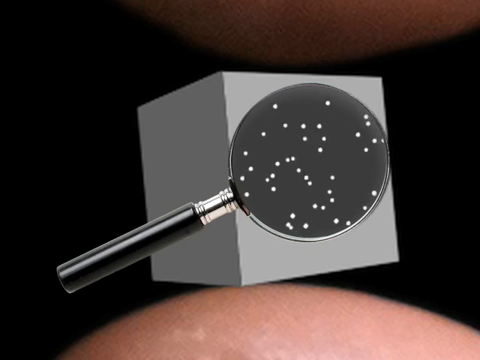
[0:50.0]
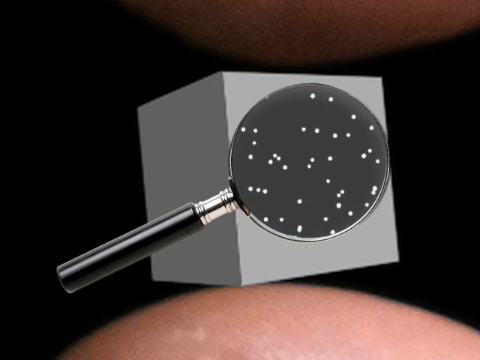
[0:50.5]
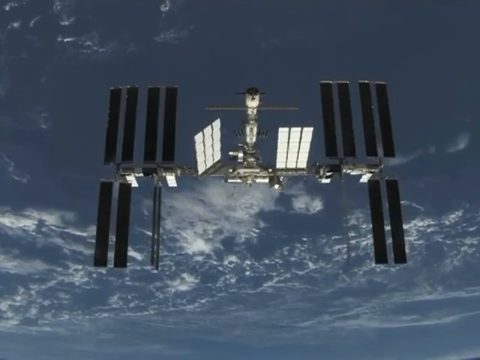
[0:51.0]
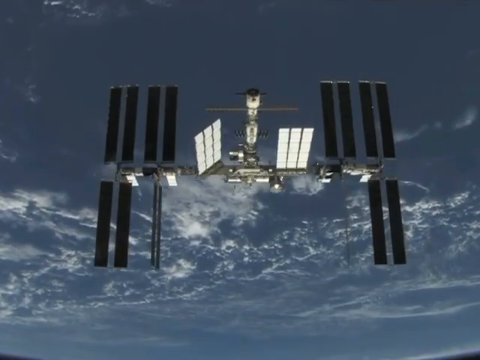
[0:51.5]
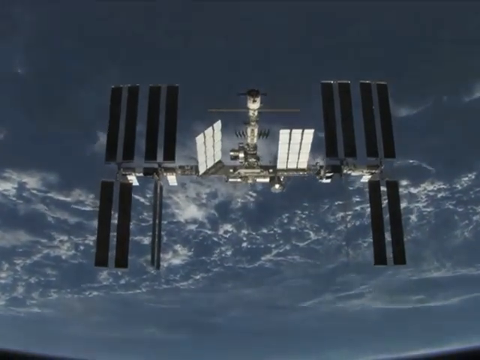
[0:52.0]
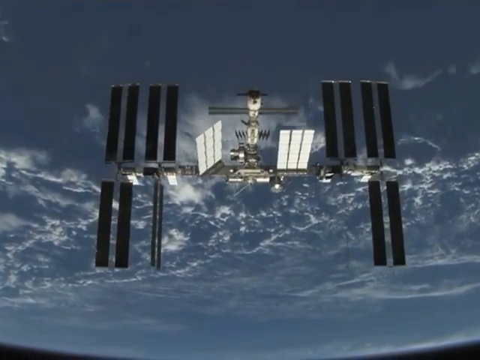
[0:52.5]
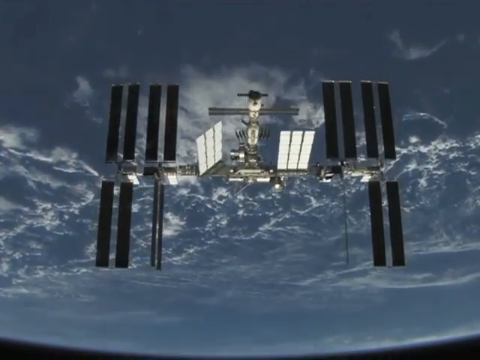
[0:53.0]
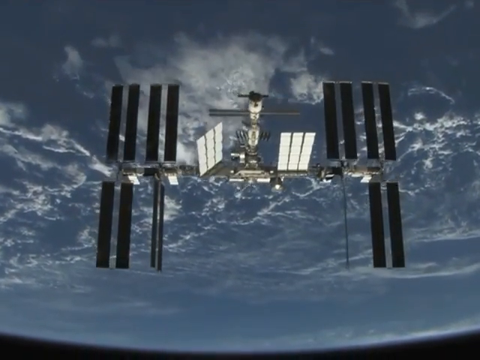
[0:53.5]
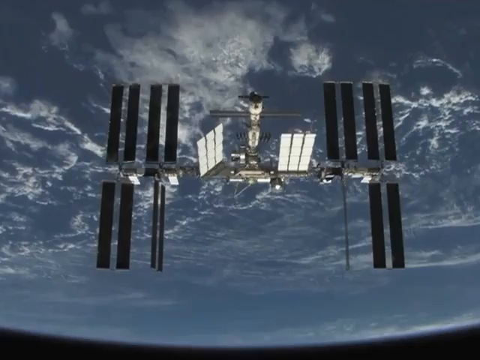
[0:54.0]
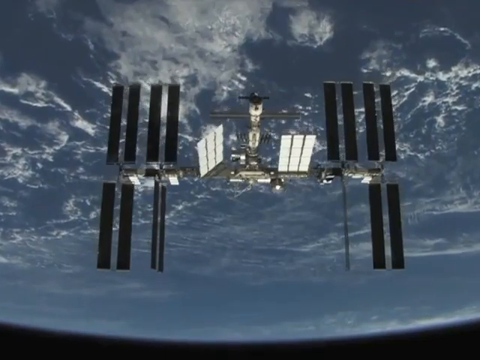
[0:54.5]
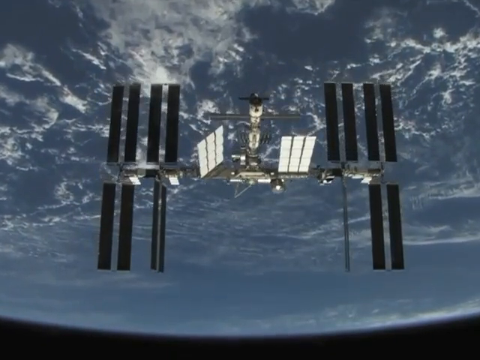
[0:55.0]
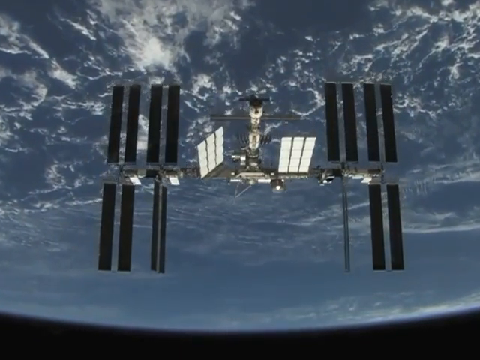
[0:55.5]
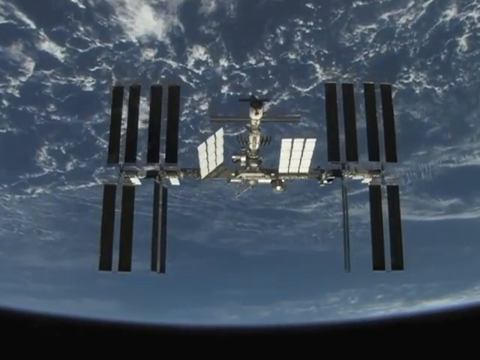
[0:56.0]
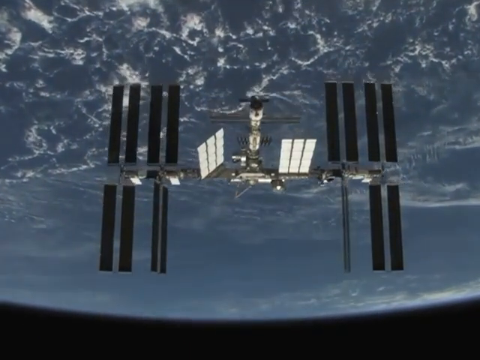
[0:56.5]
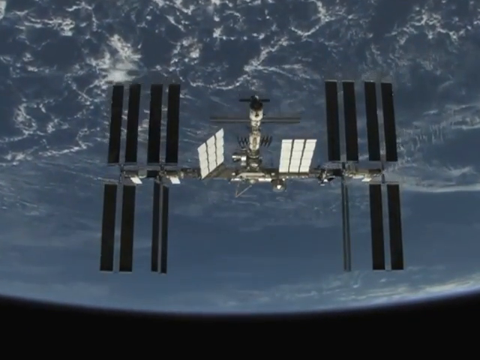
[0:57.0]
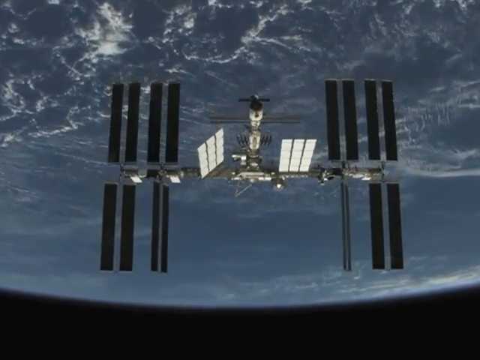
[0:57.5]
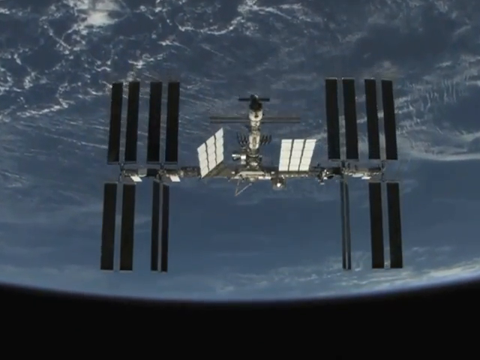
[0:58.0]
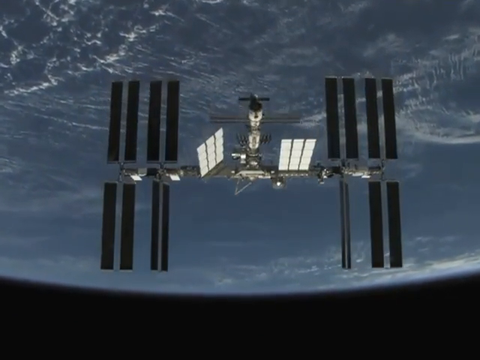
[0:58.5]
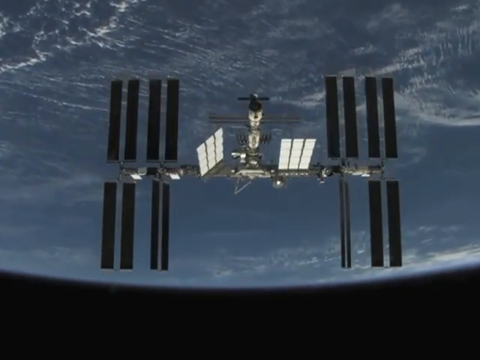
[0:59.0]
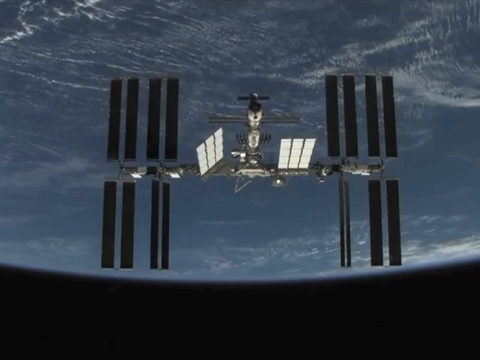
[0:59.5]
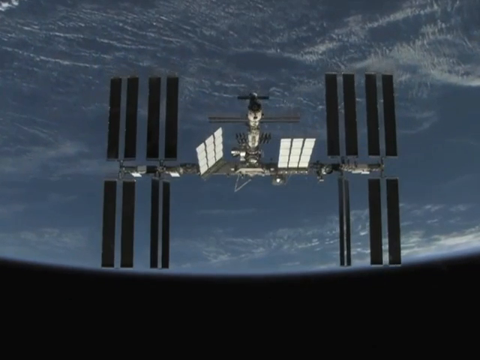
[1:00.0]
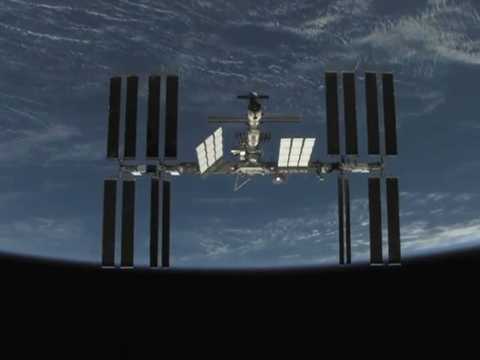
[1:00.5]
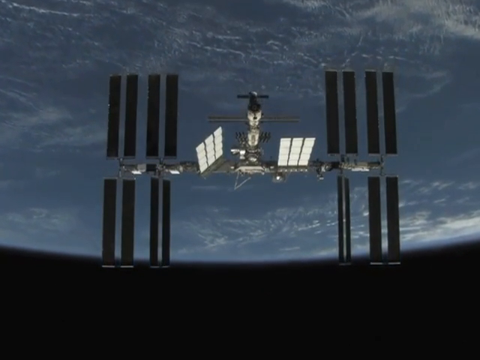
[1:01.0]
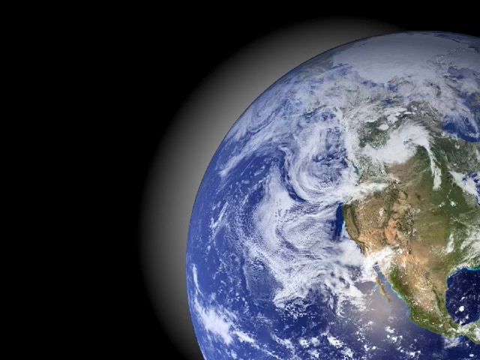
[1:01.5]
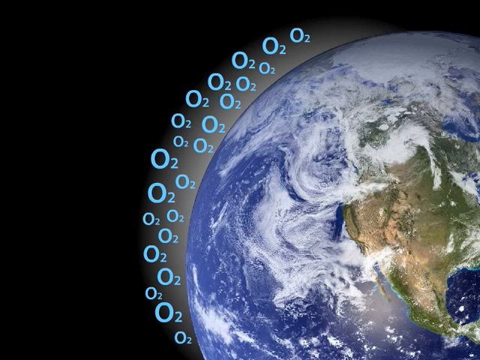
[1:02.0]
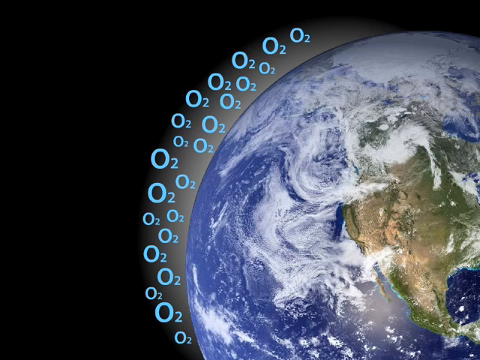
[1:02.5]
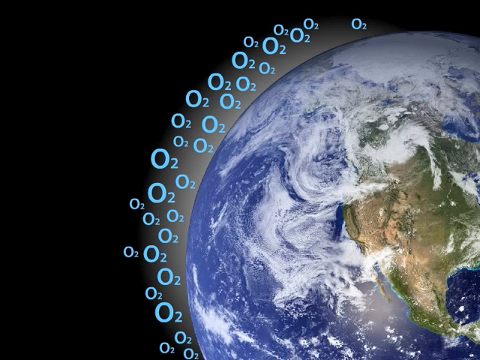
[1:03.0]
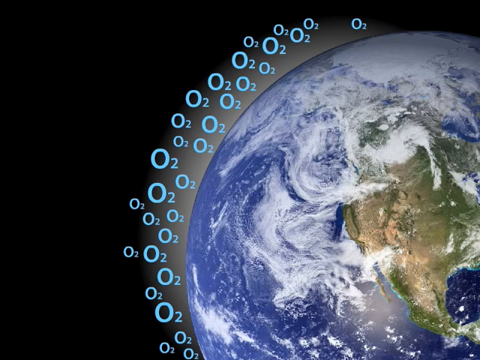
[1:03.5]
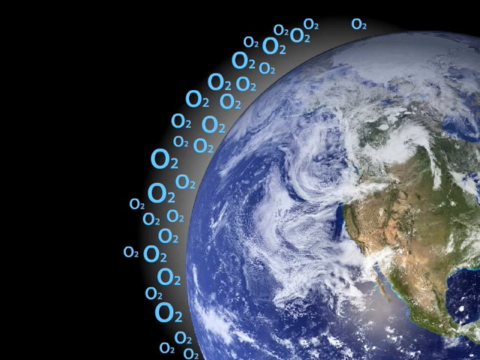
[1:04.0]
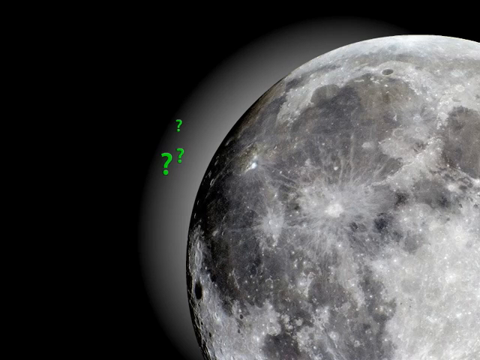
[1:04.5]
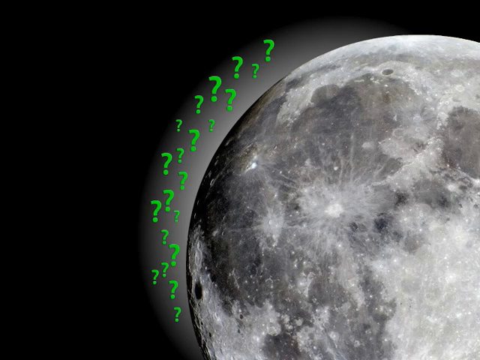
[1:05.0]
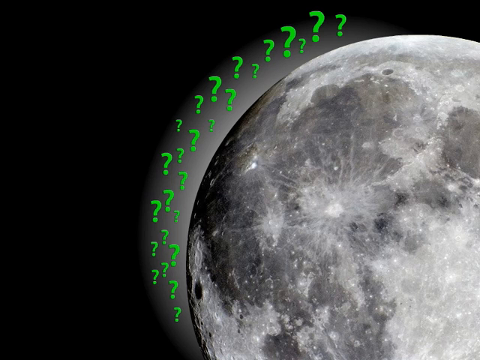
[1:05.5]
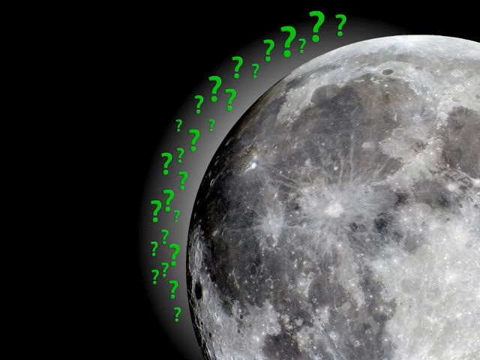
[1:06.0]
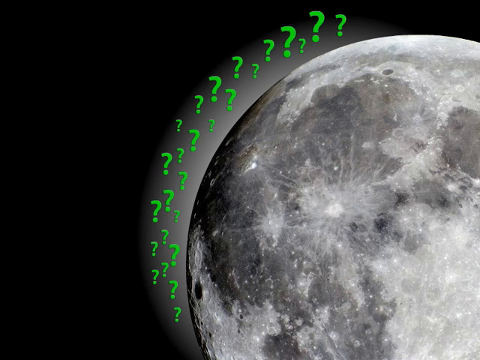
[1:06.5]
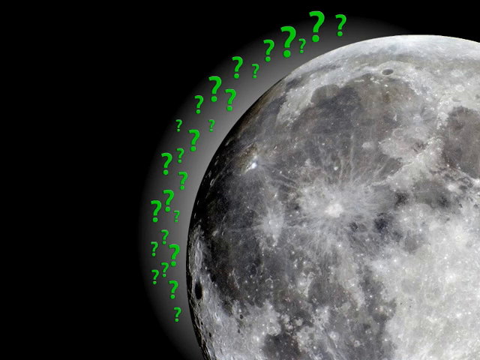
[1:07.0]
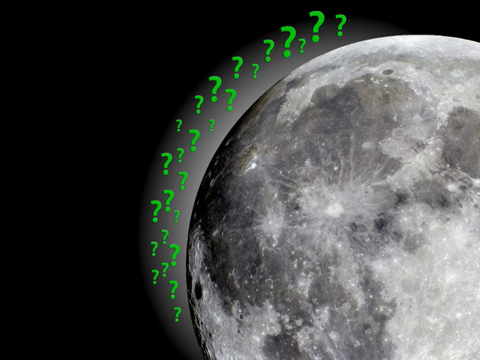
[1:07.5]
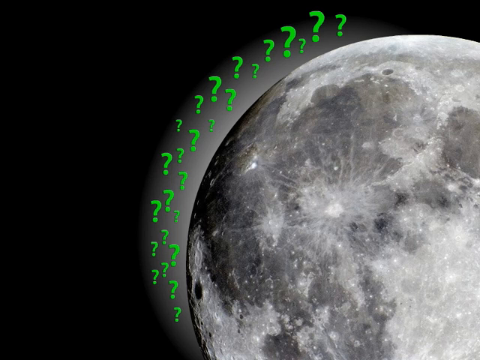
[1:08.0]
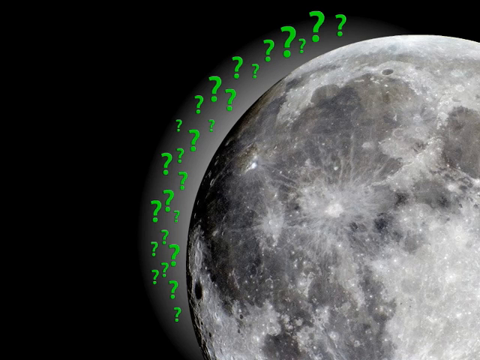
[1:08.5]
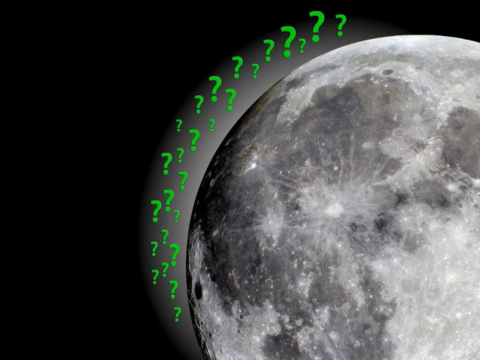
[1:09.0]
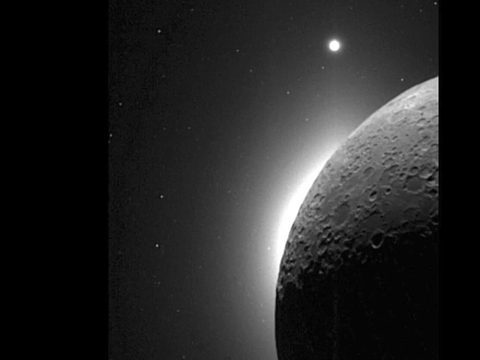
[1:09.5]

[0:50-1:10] The magnifying glass is still on the cube, with many little dots moving around. The magnifying glass has a silver metal base around it and a black handle, and the person's hand is still visible. The scene switches to a satellite up in the sky. The satellite appears to have four bars on each side on top, like solar panels, and apparently two on the bottom, while one side seems to have two facing a different direction. There is some type of machine in the middle and what looks like three white solar panels. It seems to be moving through the sky, or possibly Earth is being viewed from above. An image of Earth follows, with many "O2" labels surrounding all of it, and then it switches to green question marks.